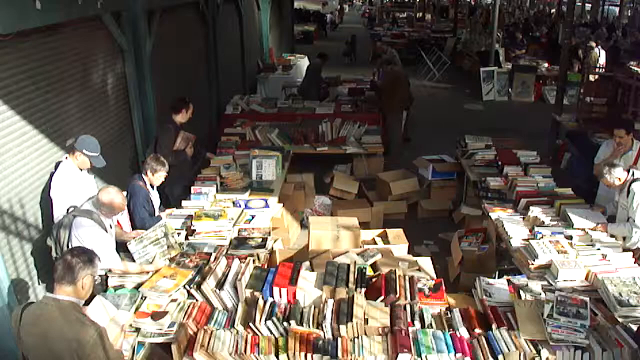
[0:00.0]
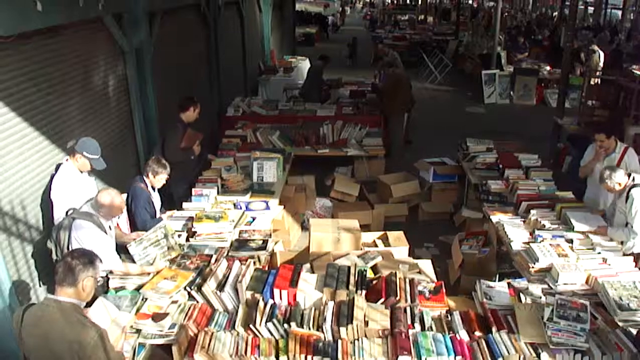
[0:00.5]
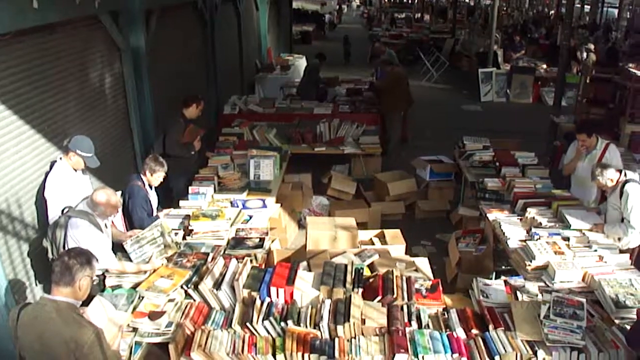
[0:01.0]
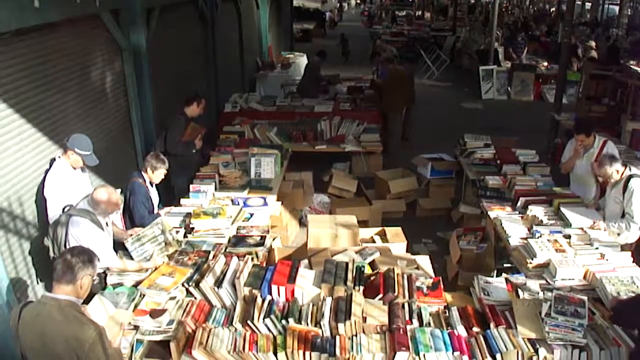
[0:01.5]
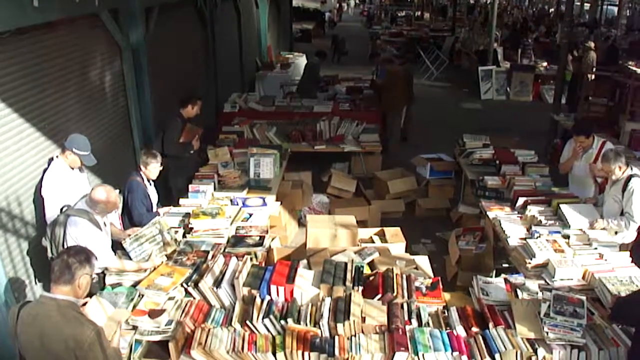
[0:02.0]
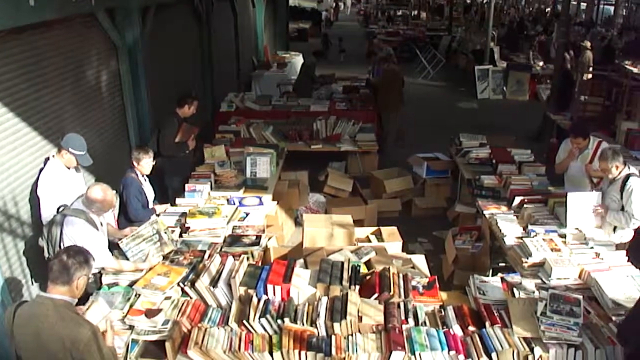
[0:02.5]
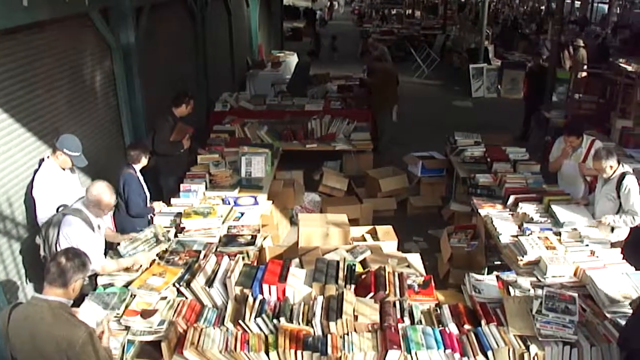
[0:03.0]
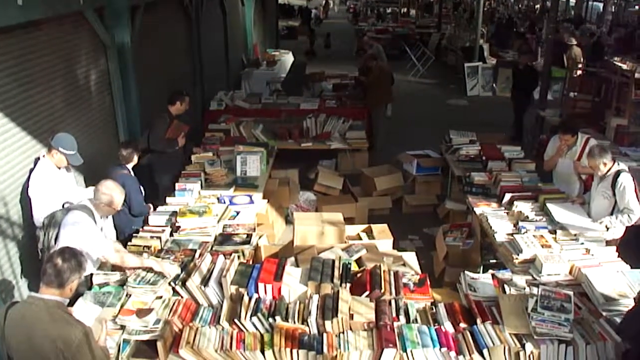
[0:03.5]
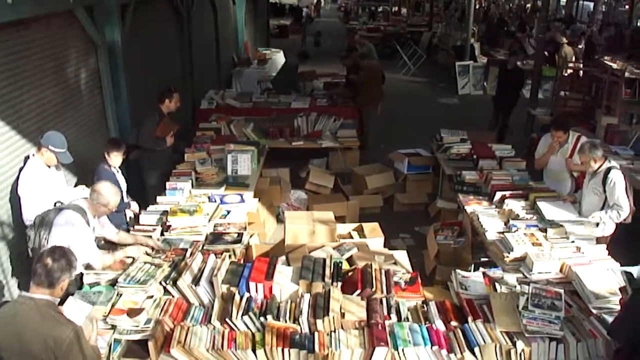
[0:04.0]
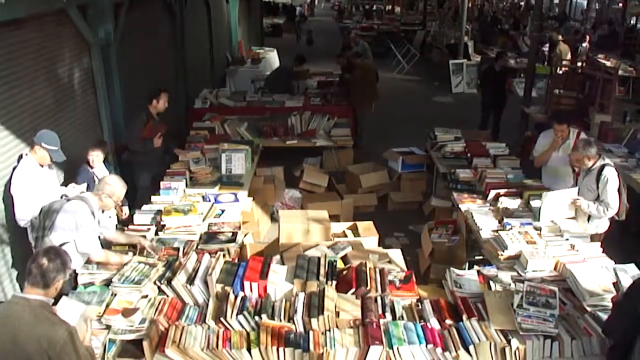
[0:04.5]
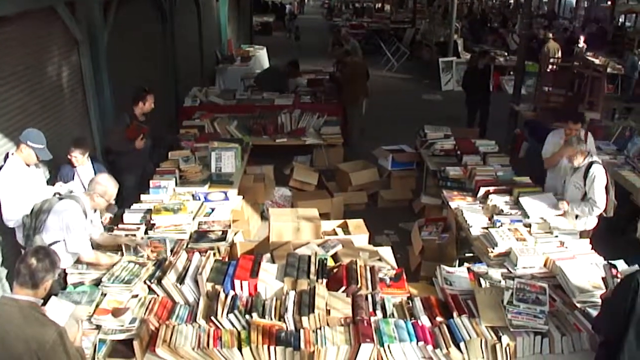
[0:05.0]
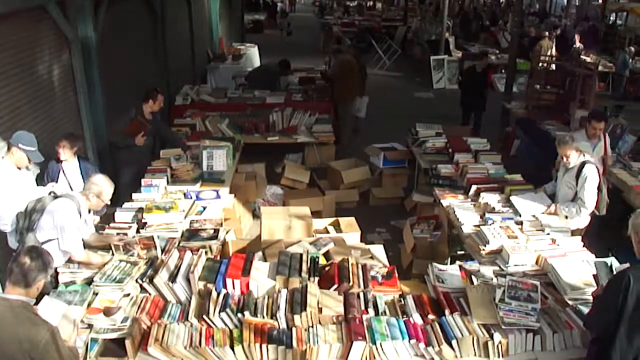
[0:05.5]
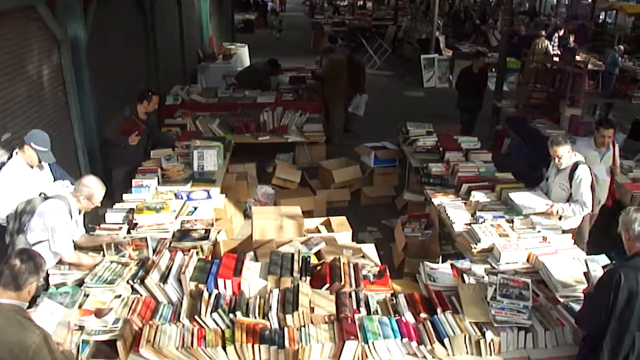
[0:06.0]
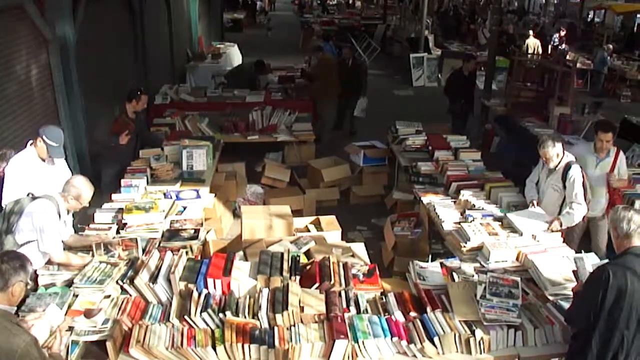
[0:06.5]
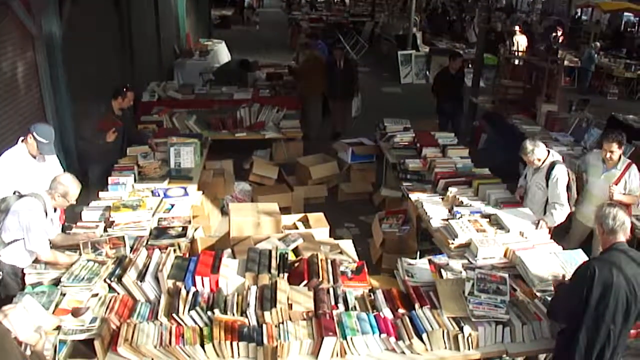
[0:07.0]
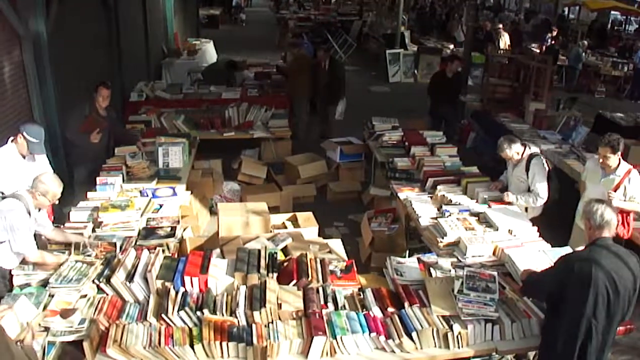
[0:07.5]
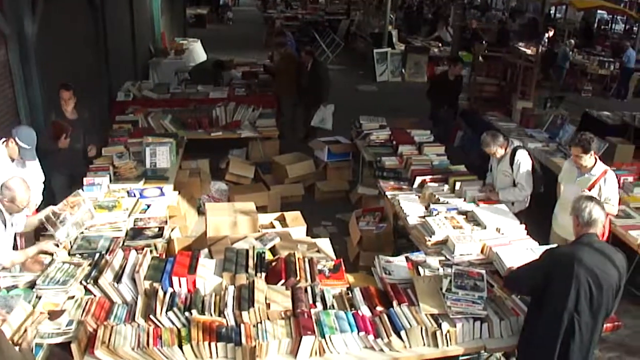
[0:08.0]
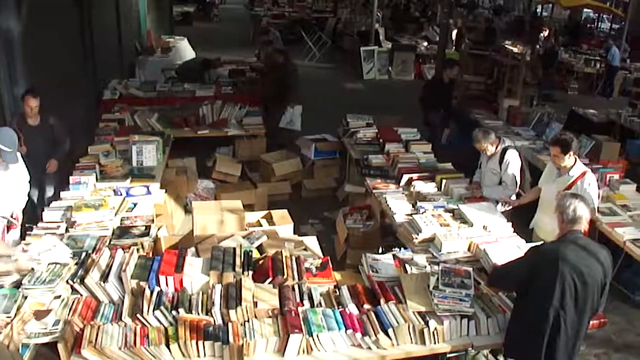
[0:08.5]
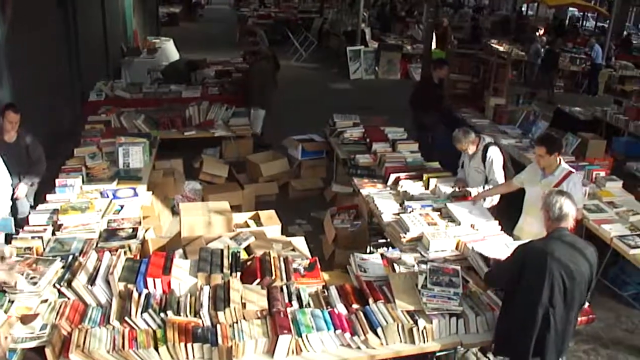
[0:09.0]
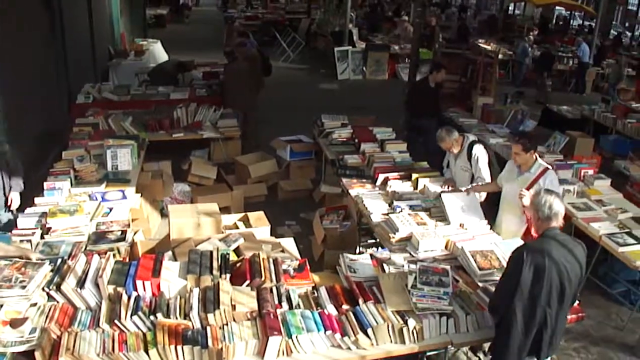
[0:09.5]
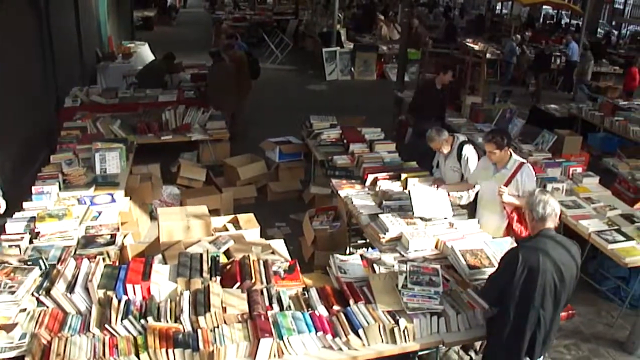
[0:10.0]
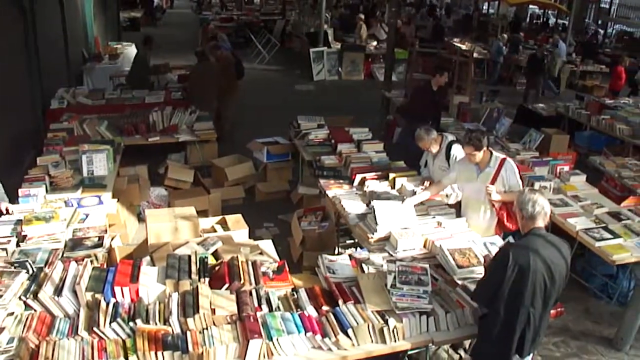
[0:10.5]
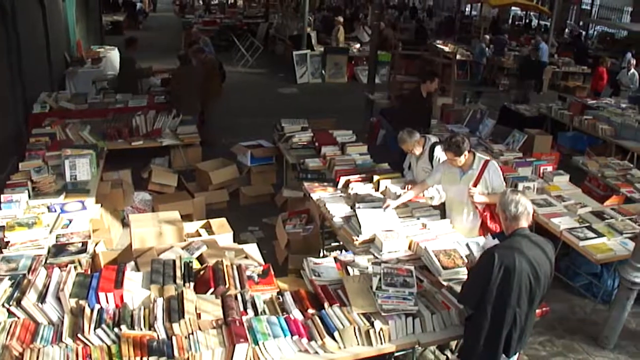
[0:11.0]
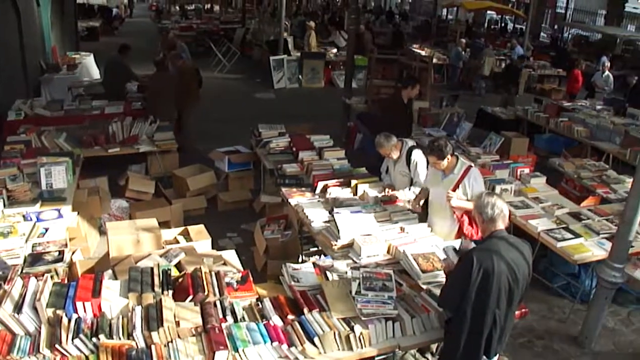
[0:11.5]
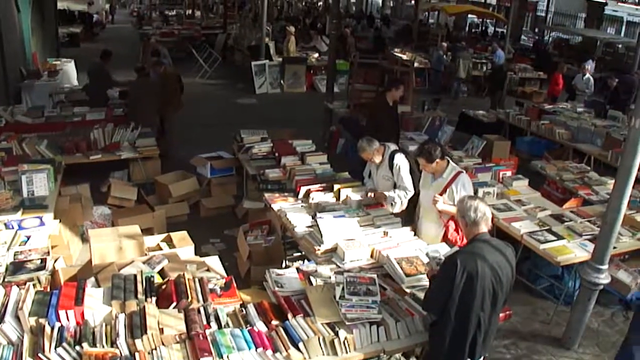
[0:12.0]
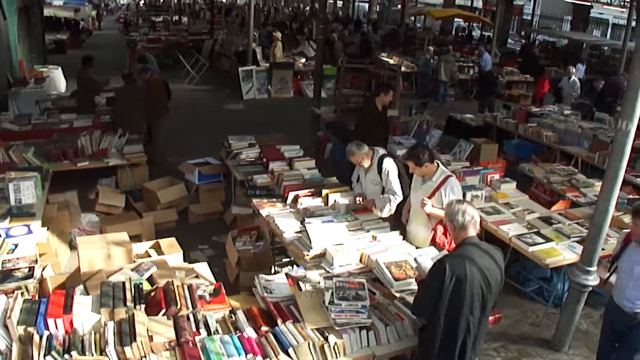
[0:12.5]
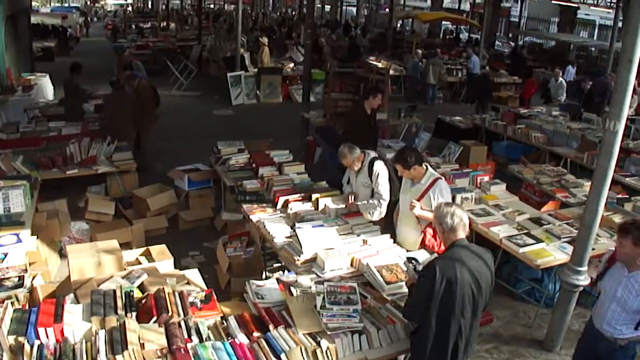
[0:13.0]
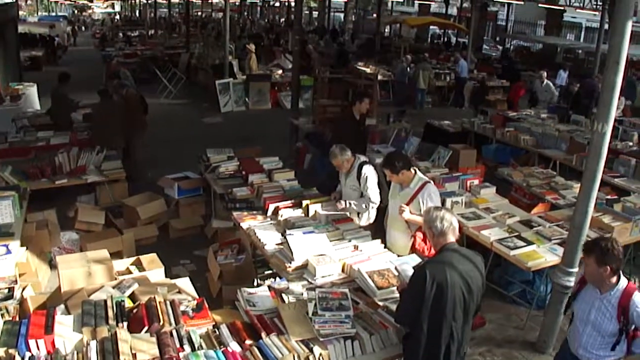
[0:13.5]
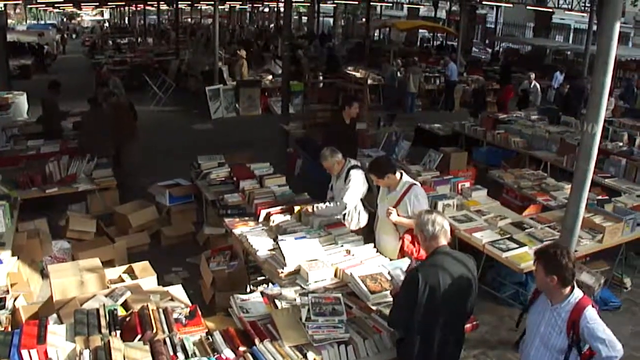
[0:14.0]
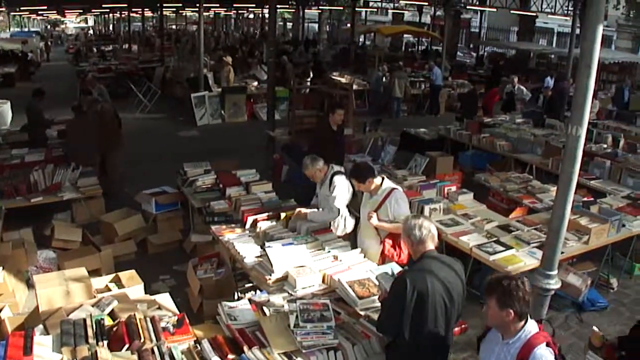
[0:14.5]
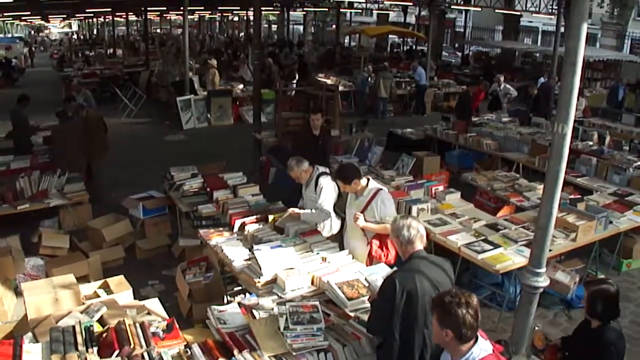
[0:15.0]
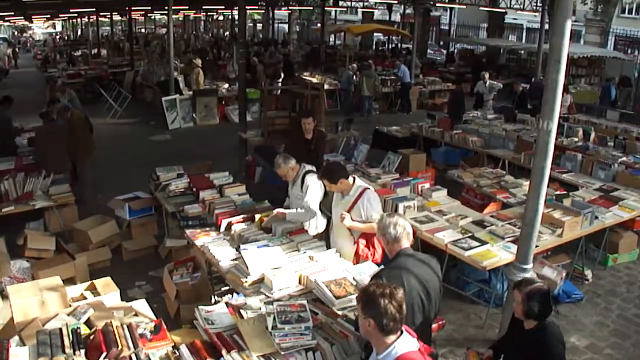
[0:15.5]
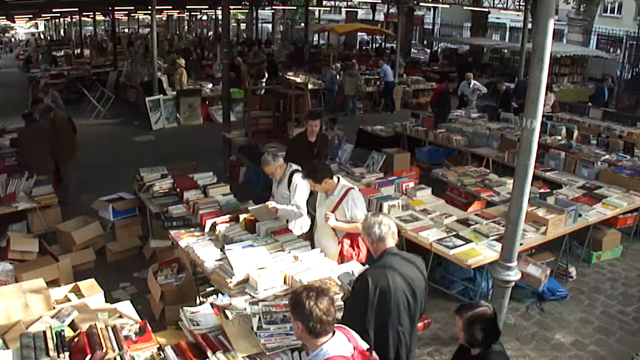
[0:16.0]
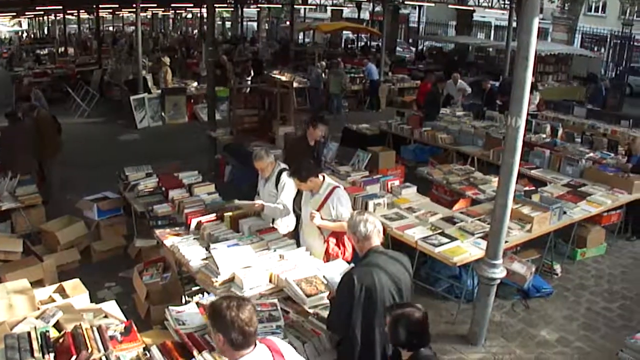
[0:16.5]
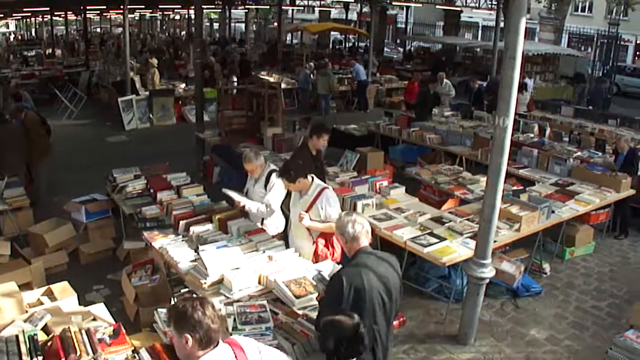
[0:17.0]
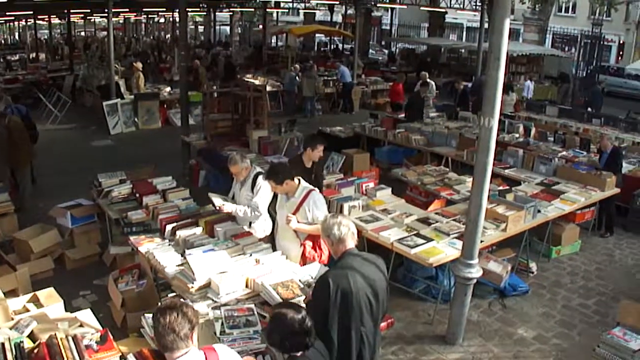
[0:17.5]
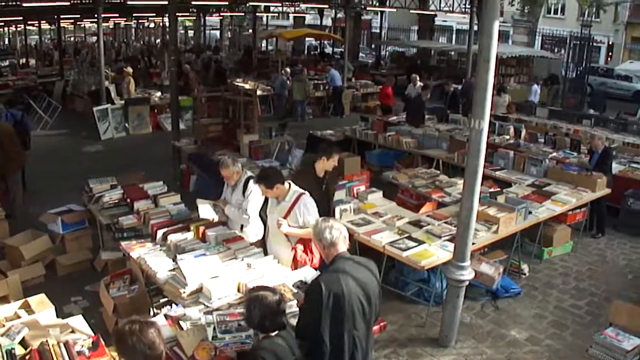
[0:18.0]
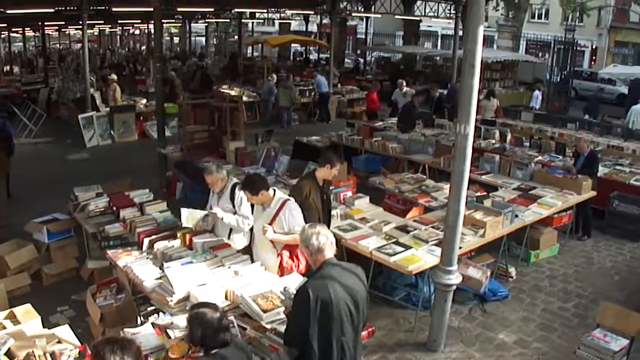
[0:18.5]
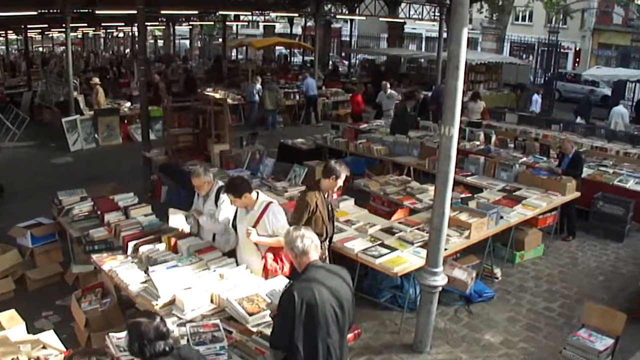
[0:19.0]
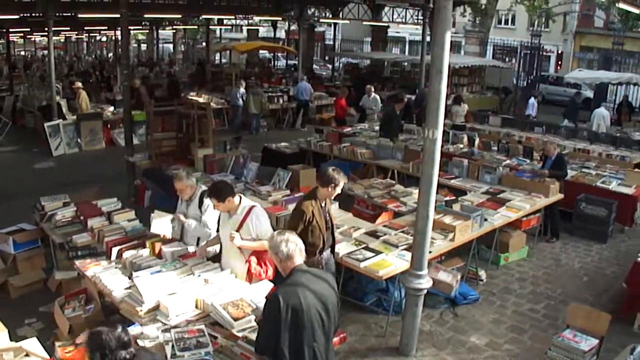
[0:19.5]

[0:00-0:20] The inside of a large bookstore, or perhaps a thrift store, is shown, with endless books filling tables. Buyers, primarily men and a few women, search around, picking up the many books and looking at them as they browse in this large market setting. Some daylight filters into the rather dark room, showing it is daytime. It could be a flea market or a street fair; this is hard to determine from this point of view, but the books are clearly many used books. The camera pans slowly from left to right, revealing shops and a street outside the market. The men shopping are of all ages and of different cultural backgrounds. The market seems to be on the street, since behind the books and tables are doors that would cover a closed store.